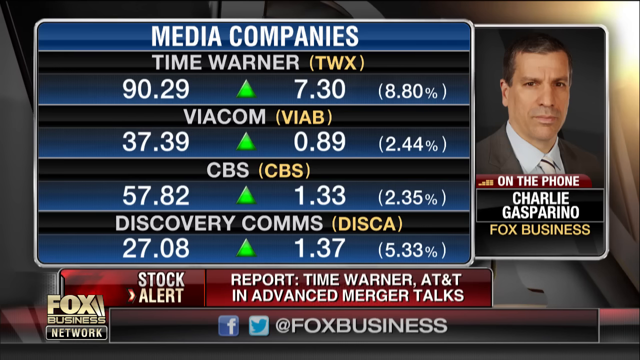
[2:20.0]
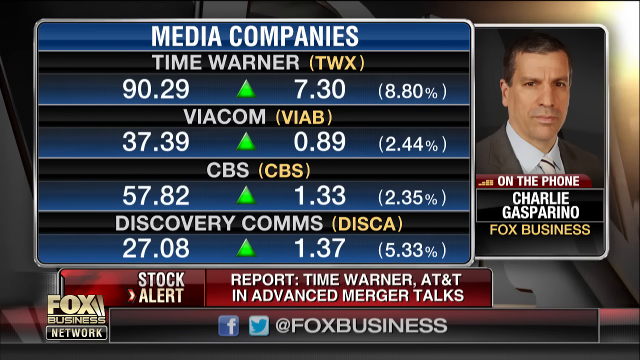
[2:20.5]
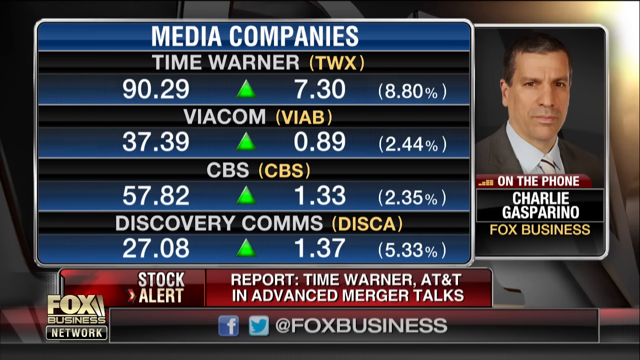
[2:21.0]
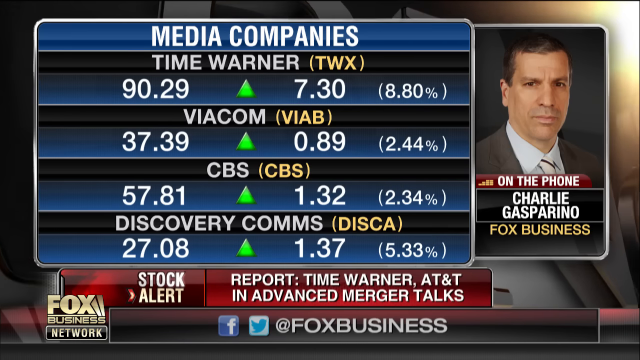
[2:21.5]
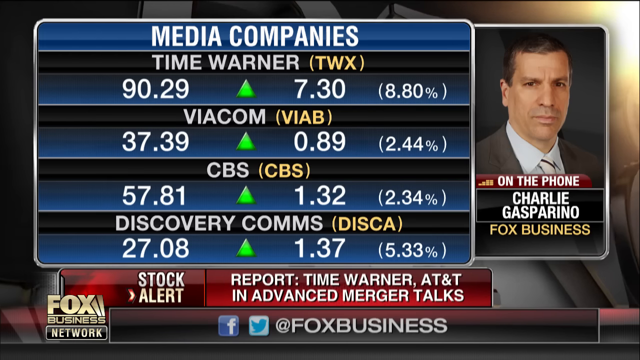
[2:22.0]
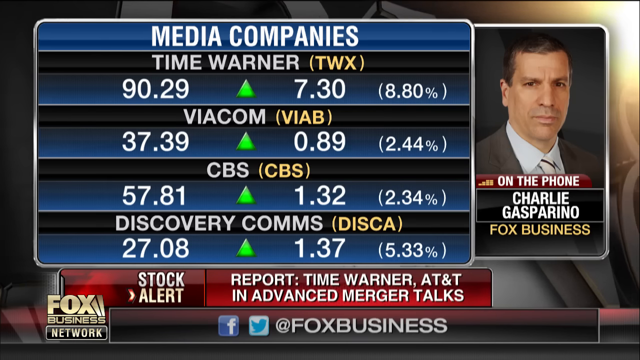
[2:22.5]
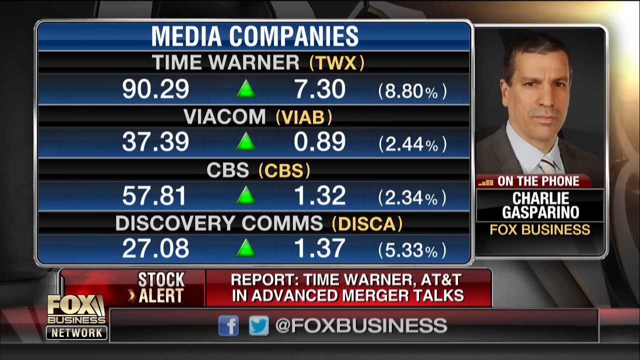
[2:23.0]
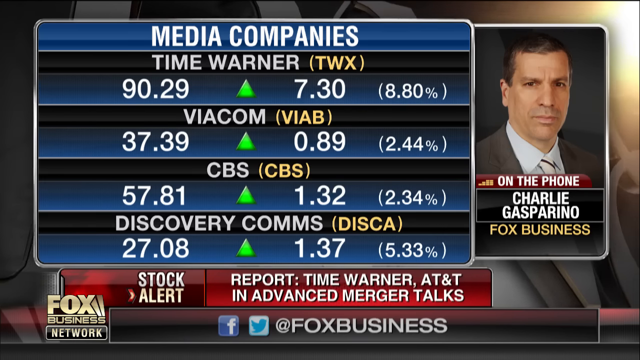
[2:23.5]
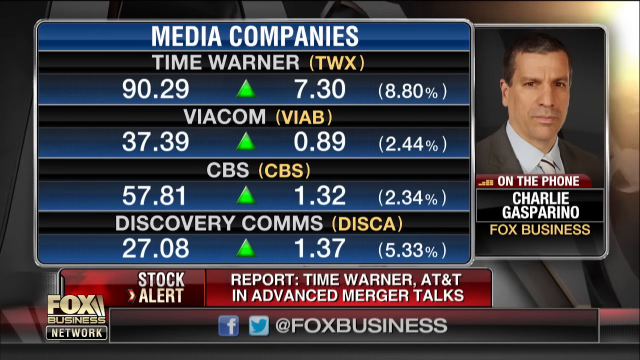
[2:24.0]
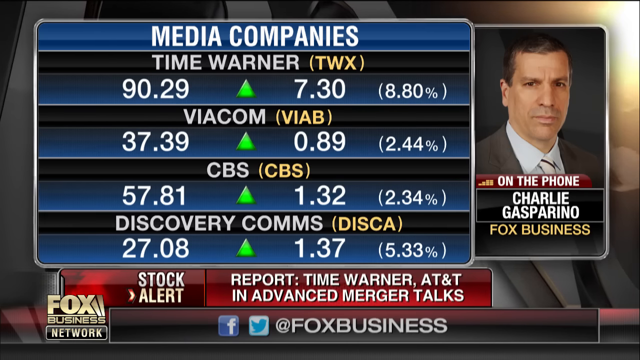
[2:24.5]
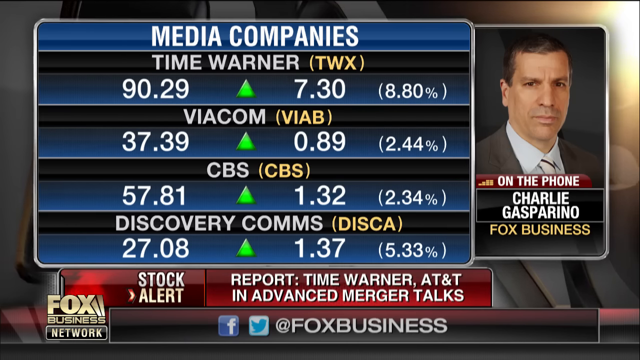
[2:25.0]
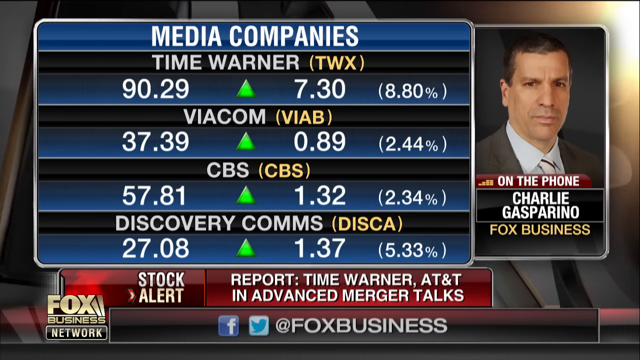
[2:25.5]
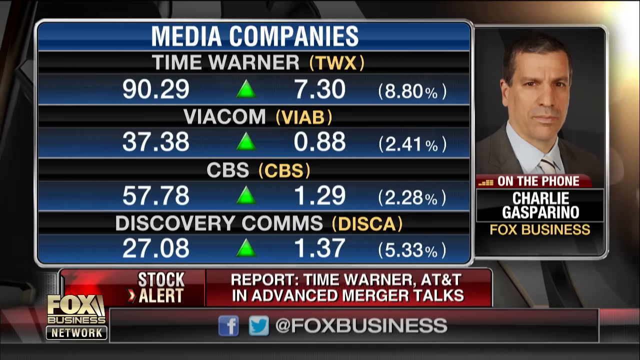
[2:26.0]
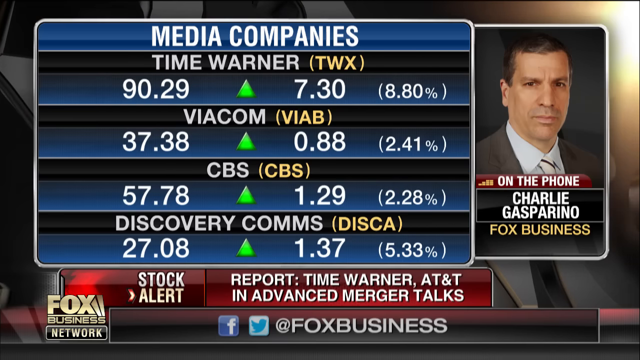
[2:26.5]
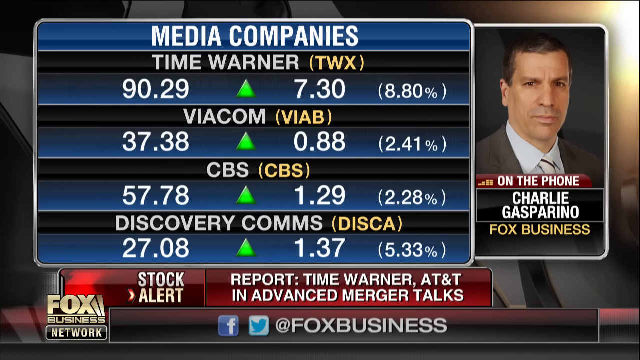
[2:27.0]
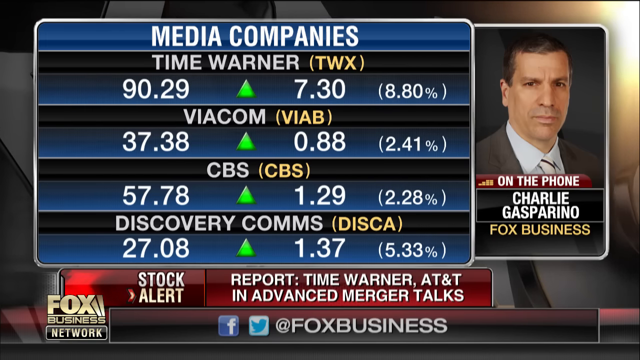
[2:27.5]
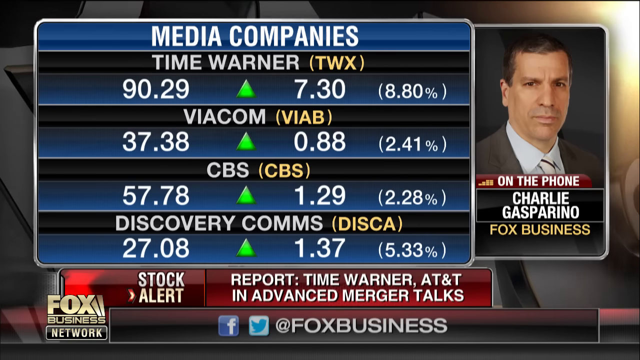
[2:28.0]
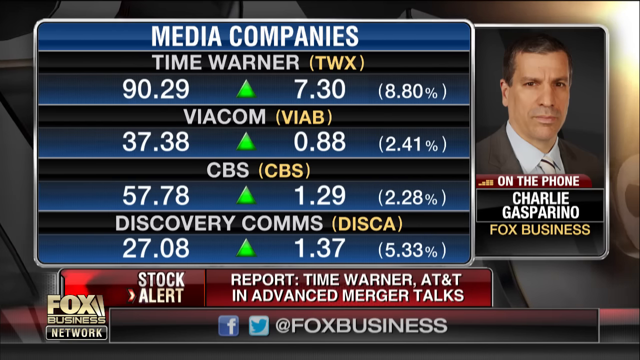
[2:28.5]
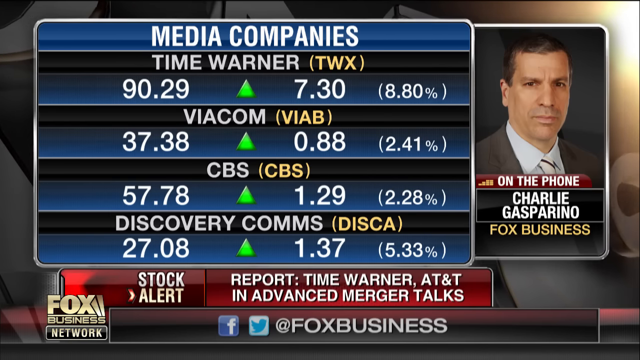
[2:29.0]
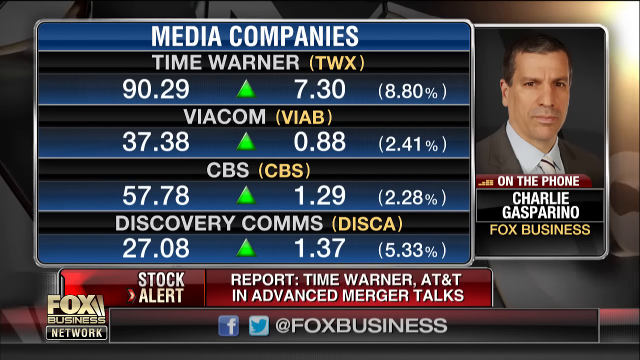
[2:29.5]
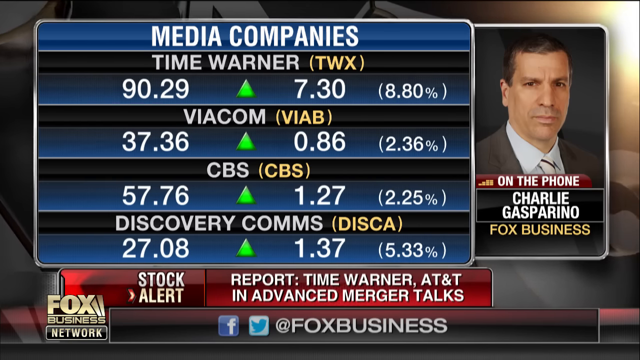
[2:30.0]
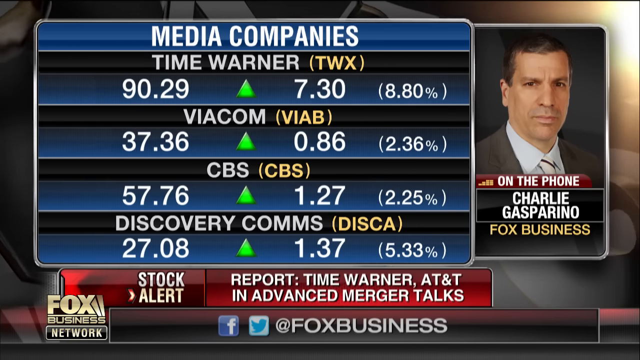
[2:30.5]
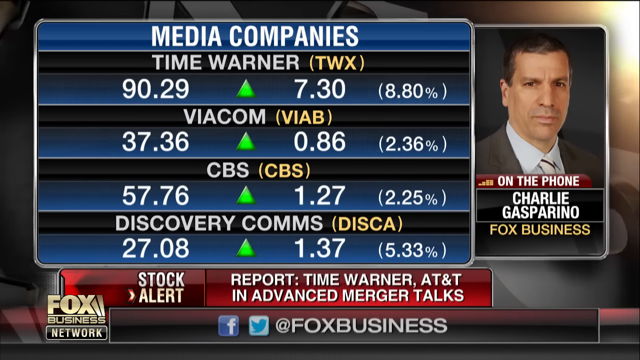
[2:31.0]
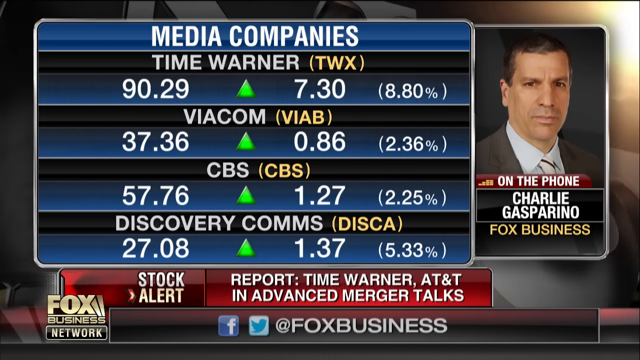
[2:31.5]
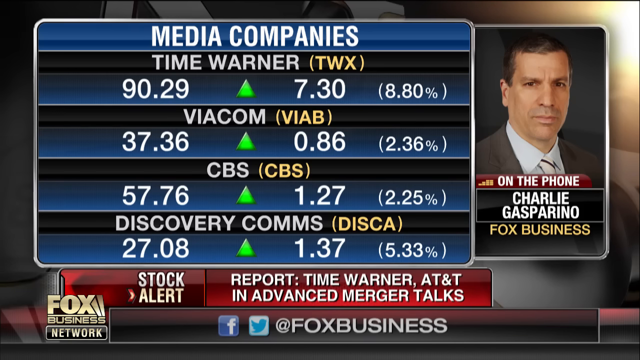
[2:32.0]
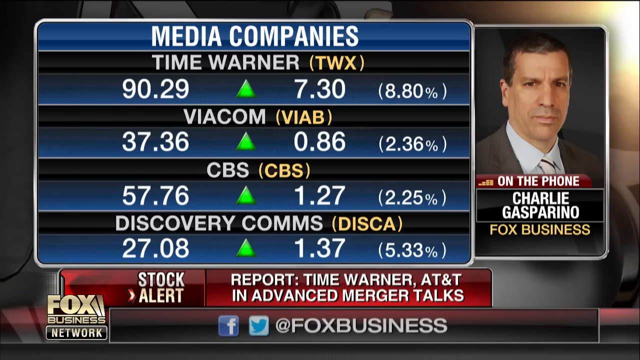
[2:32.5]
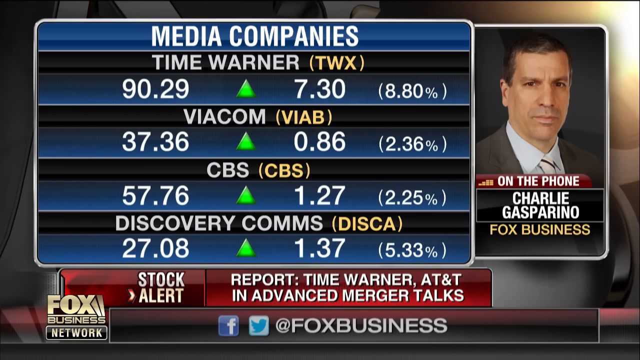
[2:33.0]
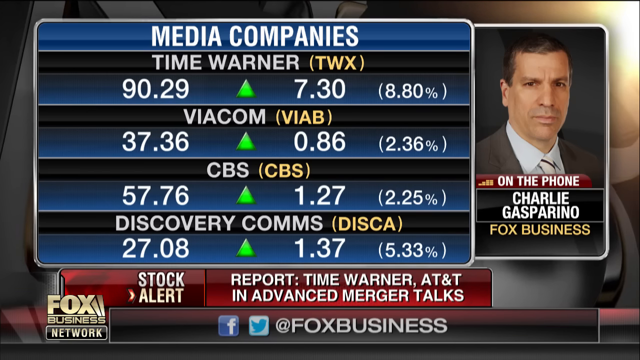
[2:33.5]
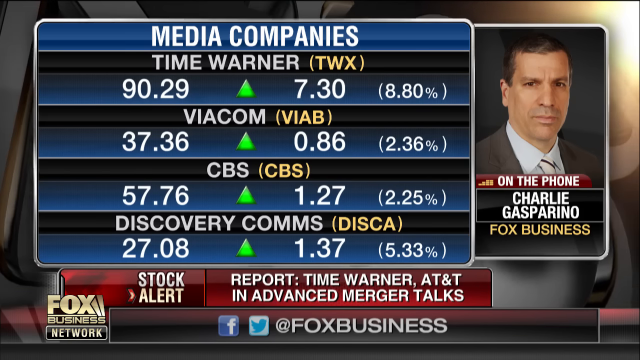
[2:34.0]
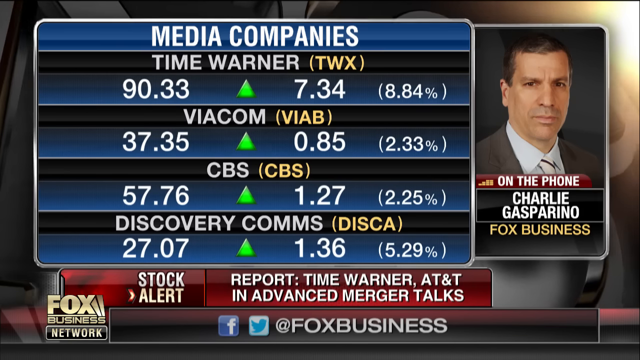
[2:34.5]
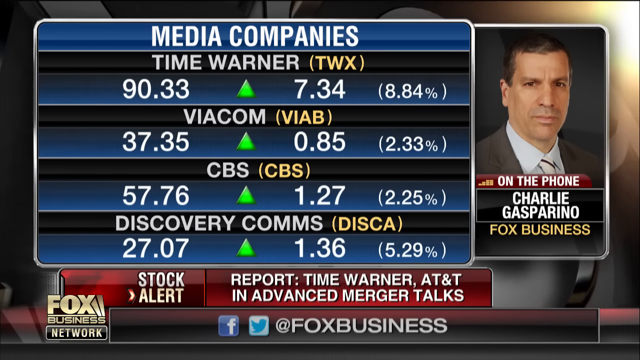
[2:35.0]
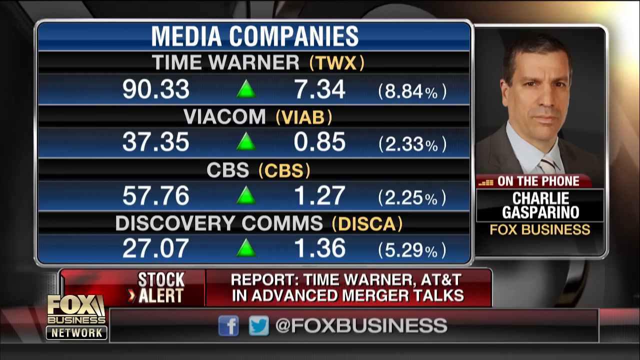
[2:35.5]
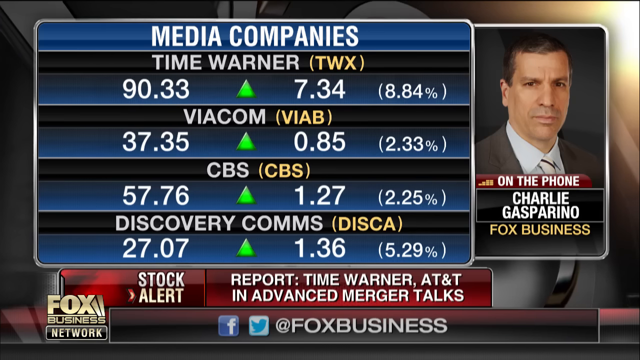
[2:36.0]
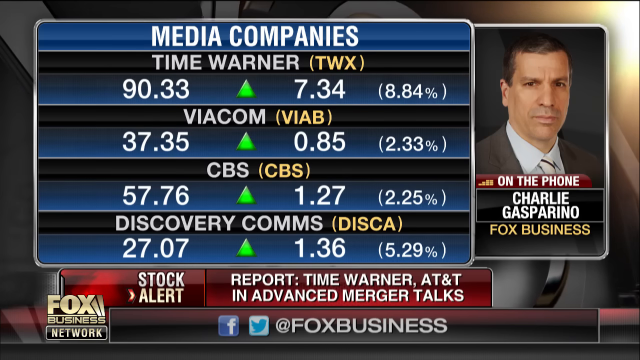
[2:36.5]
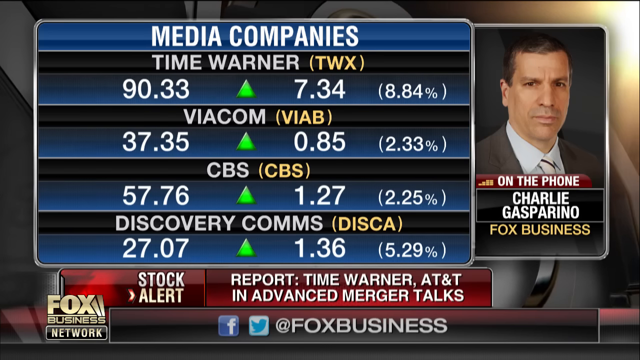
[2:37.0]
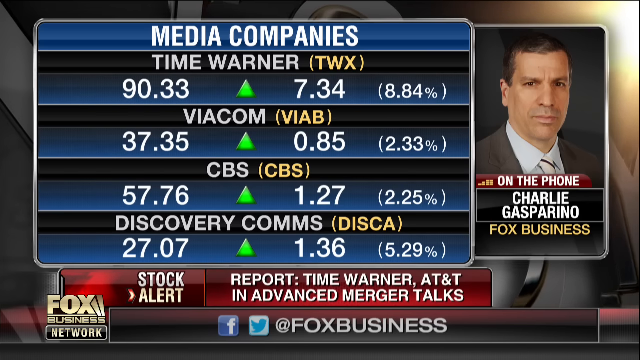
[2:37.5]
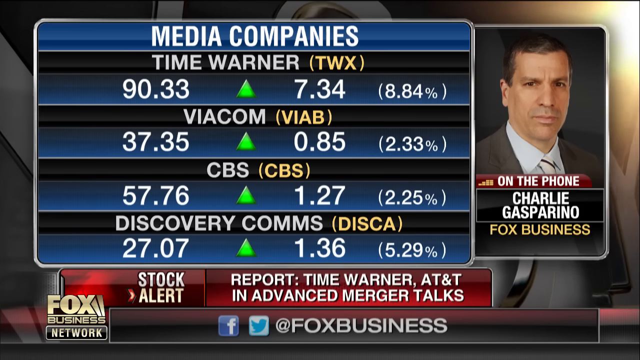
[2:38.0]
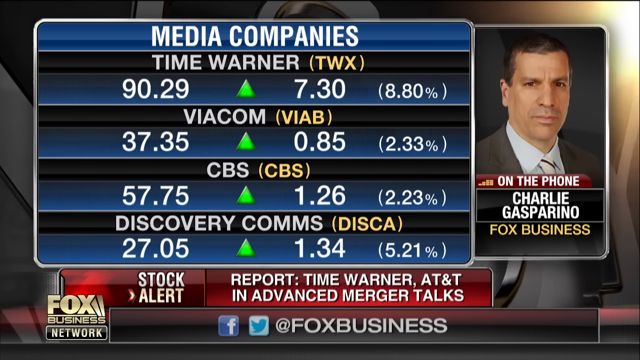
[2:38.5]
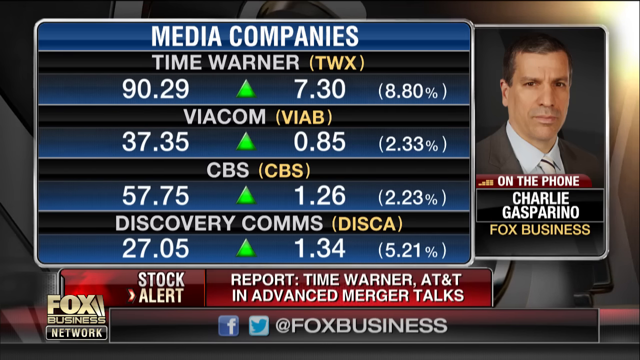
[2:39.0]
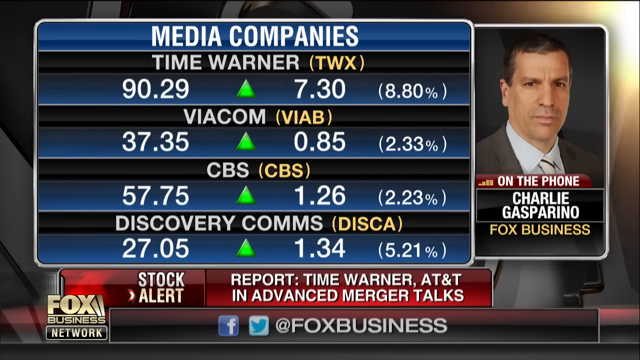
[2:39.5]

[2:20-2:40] The words "stock alert" in the upper news ticker glisten, and the prices change to Time Warner 90.29, up 7.30, 8.80%; Viacom 37.39, up 0.89, 2.44%; CBS 57.81, up 1.32, 2.34%; Discovery Comms 27.08, up 1.37, 5.33%. Viacom then changes to 37.38, up 0.88, 2.41, and CBS to 57.78, up 1.29, 2.28. Viacom changes to 37.36, up 0.86, 2.36%, and CBS to 57.76, up 1.27, 2.25. Then Time Warner changes to 90.33, up 7.34, 8.84%; Viacom to 37.35, up 0.85, 2.33%; and Discovery Comms to 27.07, up 1.36, 5.29%. "Stock Alert" in the upper ticker glistens, and the prices change to Time Warner 90.29, up 7.30, 8.80%; CBS 57.75, up 1.26, 2.23%; Discovery Comms 27.05, up 1.34, 5.21%. The gray letters in the back continue to rotate, and the borders around the windows shine and glisten.